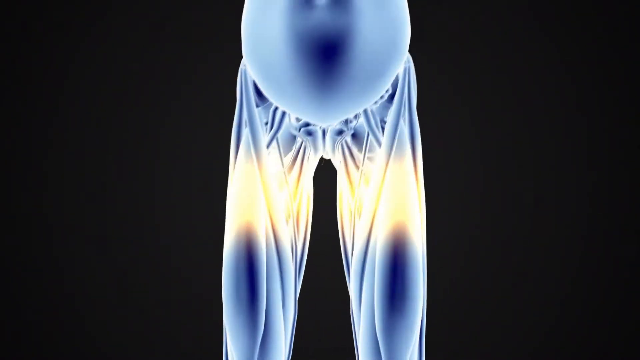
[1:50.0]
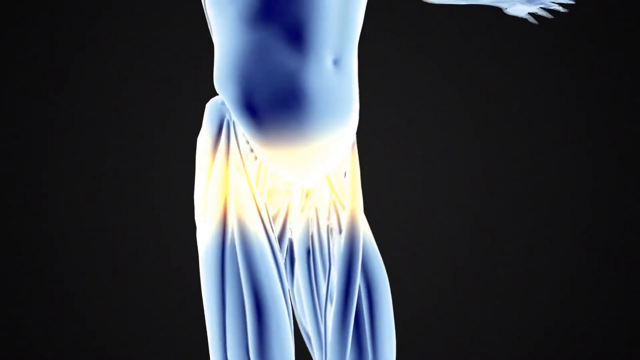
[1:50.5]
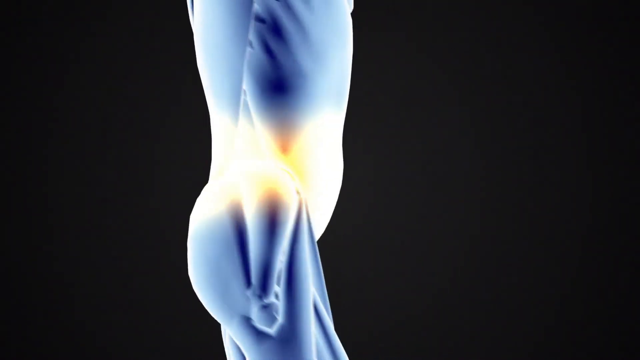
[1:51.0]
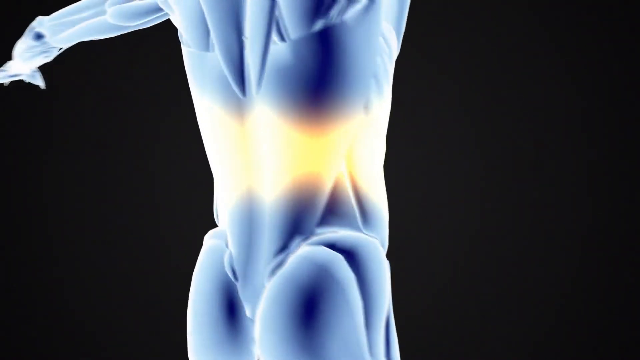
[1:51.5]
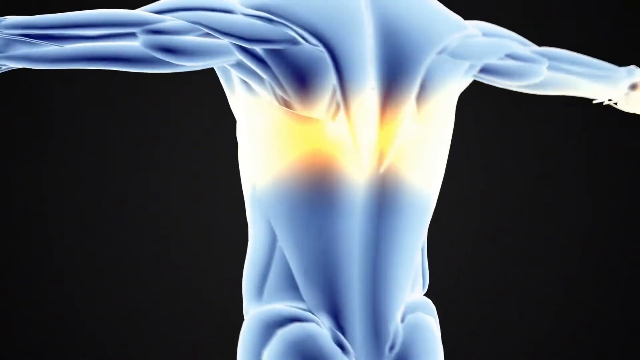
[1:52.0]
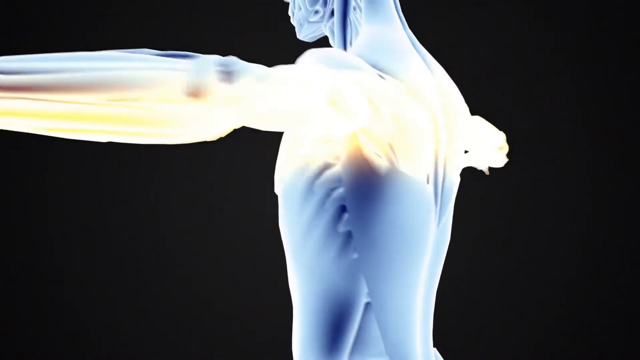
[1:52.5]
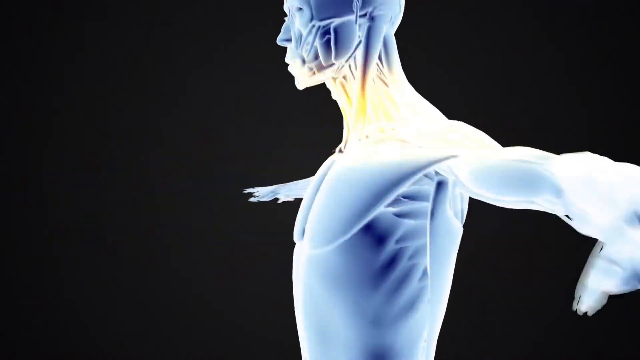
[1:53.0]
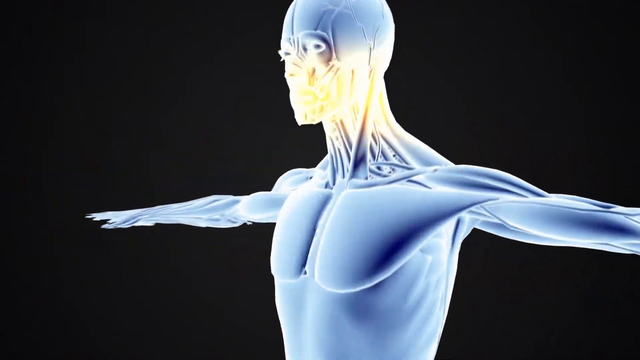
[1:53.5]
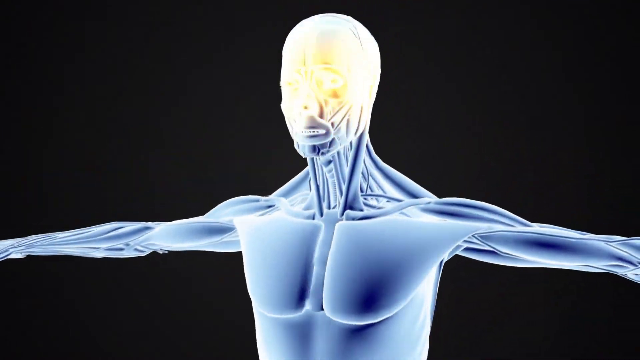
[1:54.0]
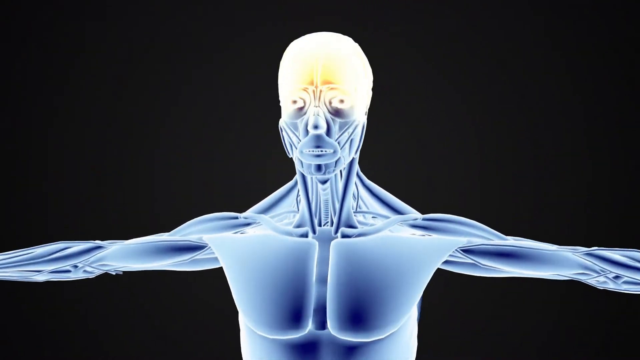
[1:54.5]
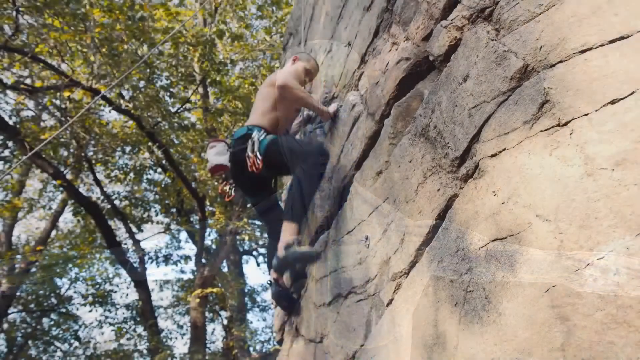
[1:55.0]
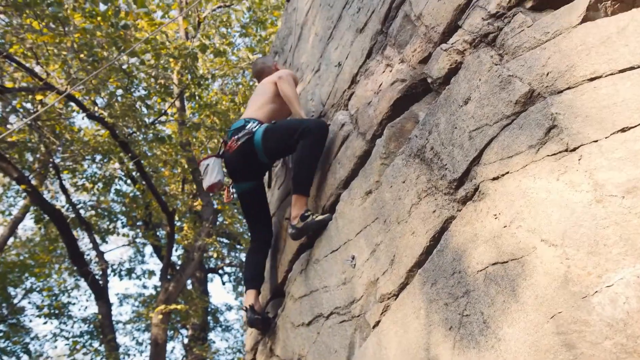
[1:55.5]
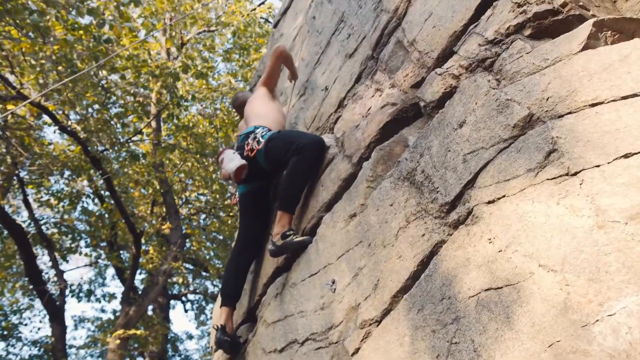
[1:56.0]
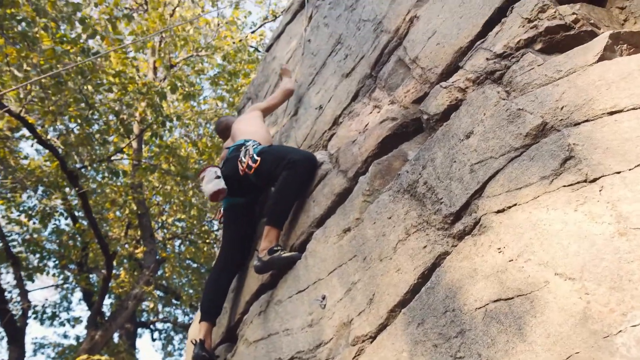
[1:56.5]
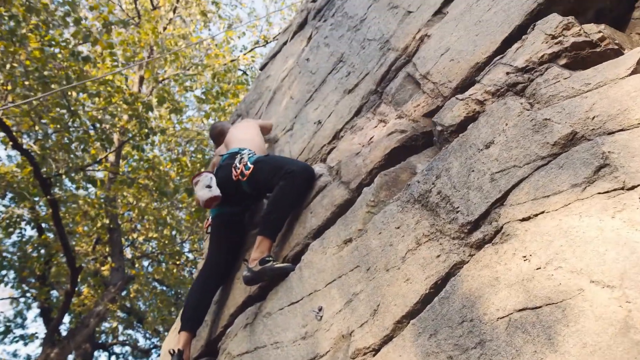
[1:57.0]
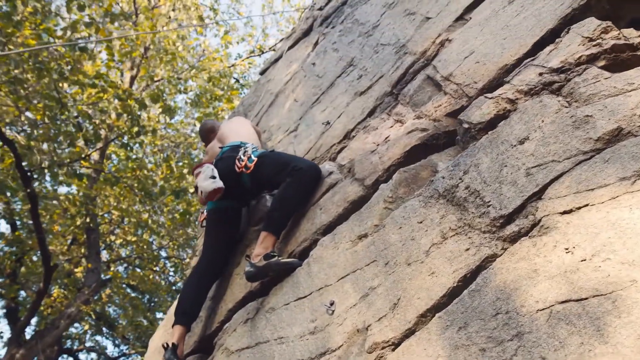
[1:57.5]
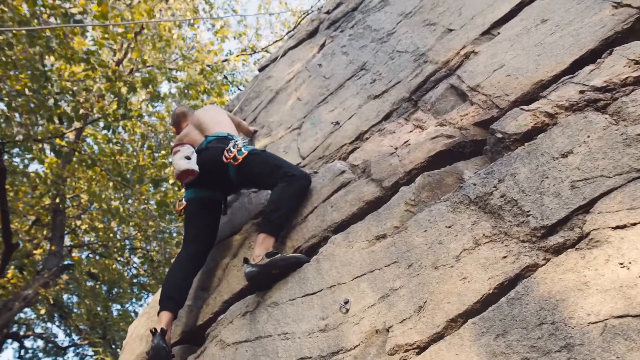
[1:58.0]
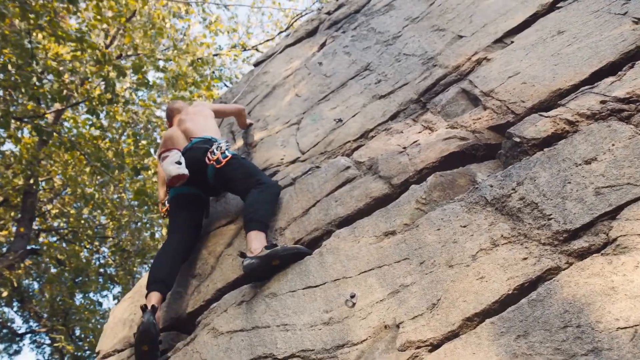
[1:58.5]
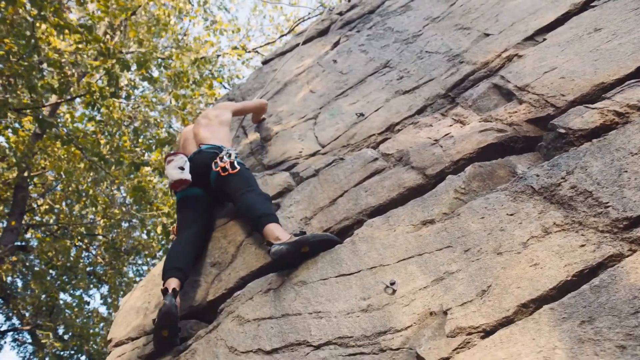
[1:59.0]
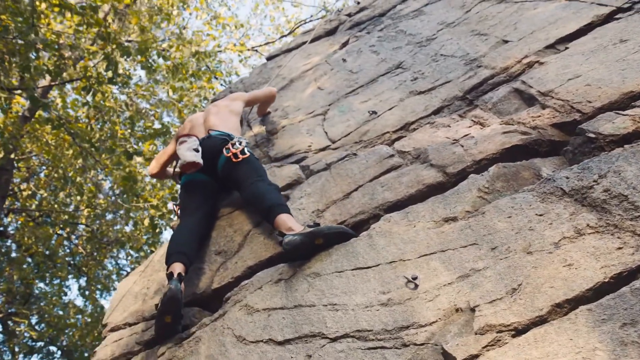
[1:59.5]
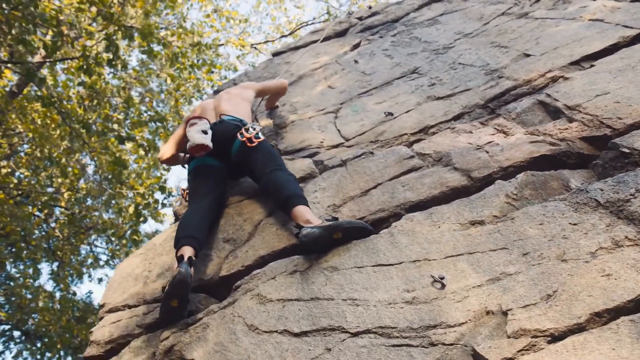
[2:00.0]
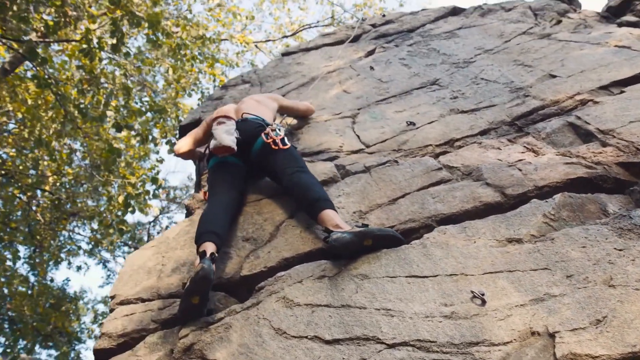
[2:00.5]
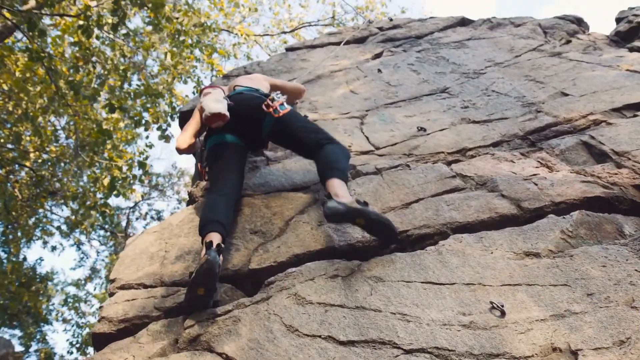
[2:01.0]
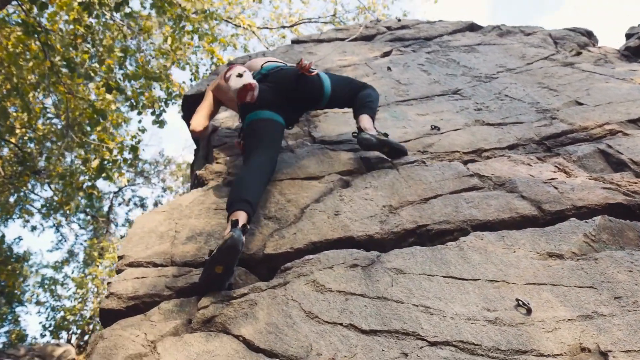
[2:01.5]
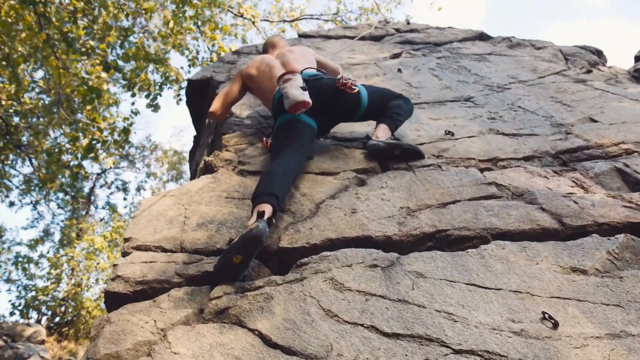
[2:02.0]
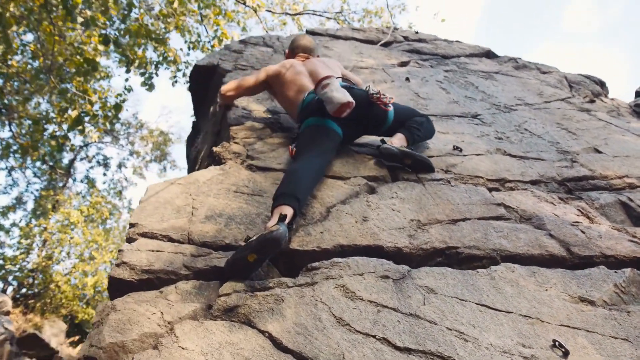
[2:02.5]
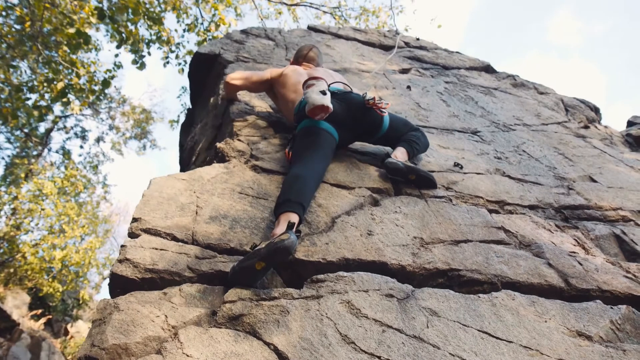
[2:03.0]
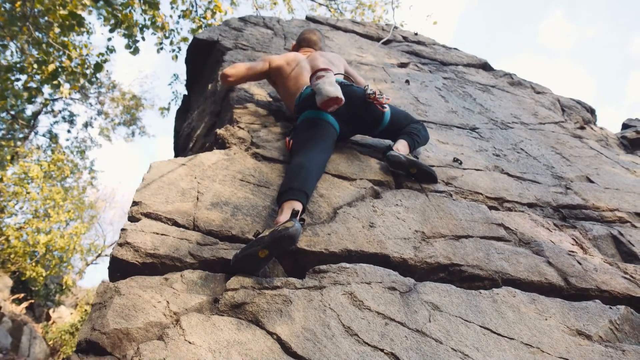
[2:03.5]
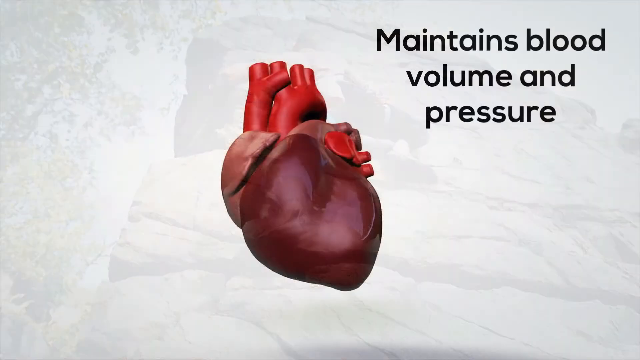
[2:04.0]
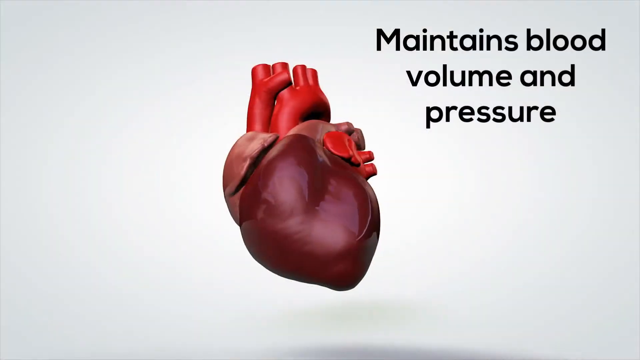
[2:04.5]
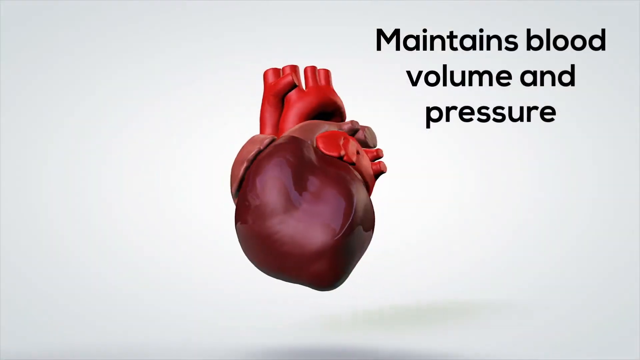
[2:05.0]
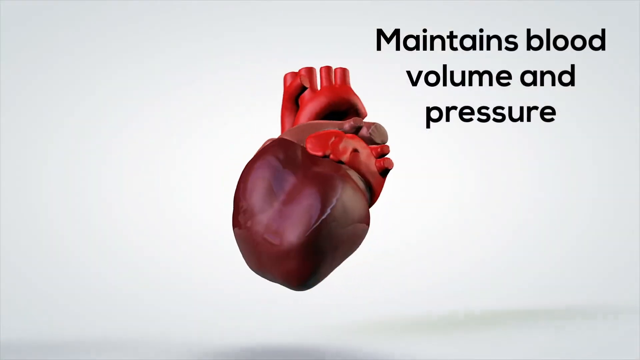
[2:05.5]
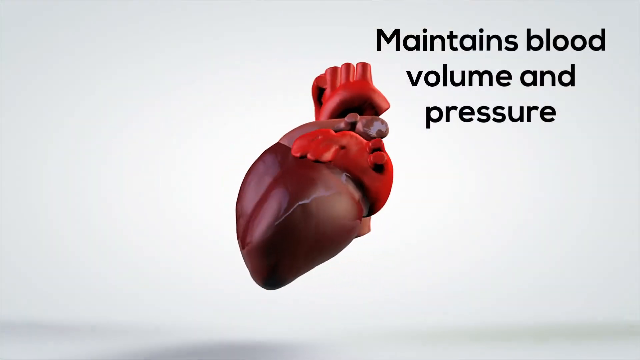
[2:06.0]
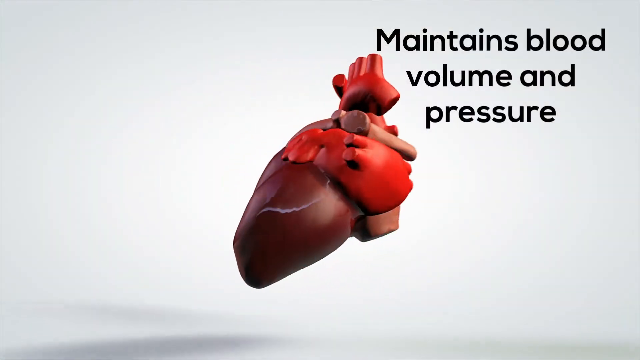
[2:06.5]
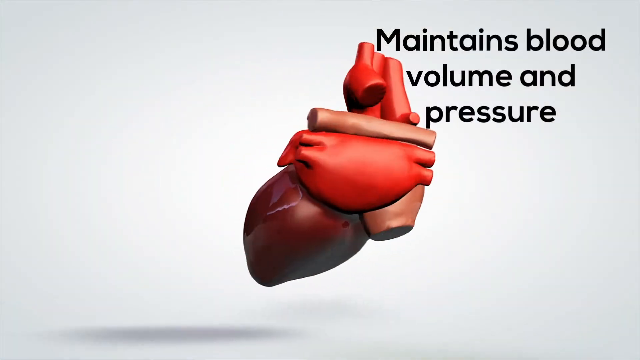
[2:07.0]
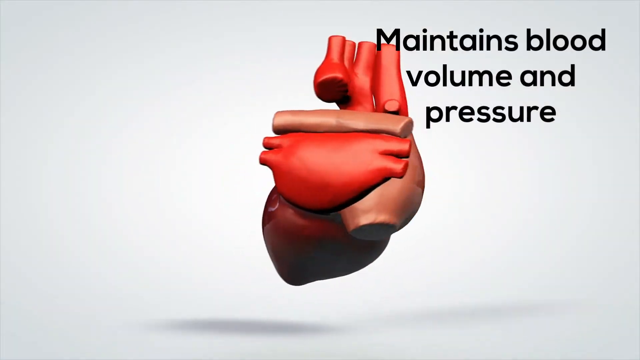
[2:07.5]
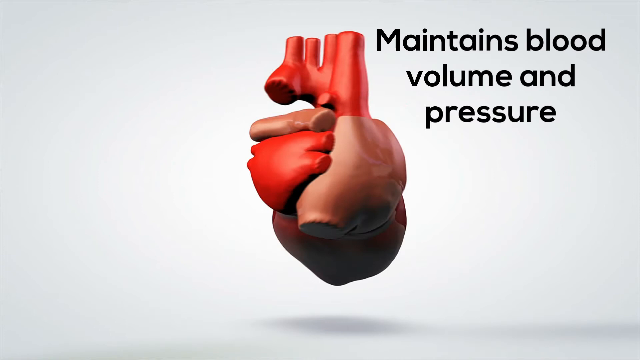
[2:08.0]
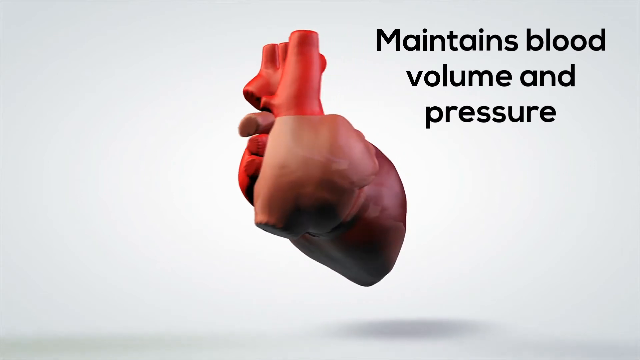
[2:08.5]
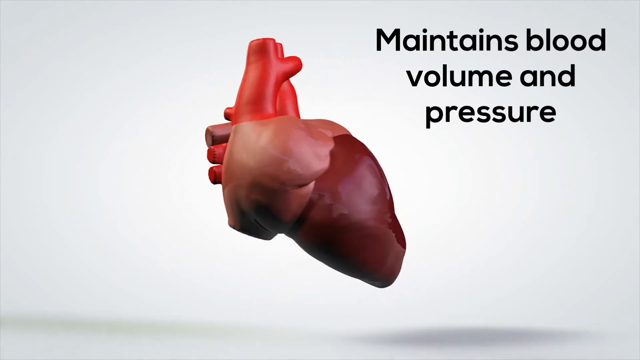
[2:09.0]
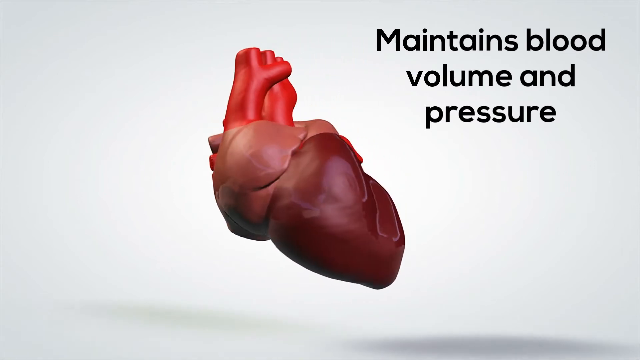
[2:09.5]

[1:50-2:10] A human body illuminated in blue lighting is shown moving in circular movements on the screen. The video moves to a man rock climbing. The rock is visible, with some trees on the side. A water bottle is tied around his waist, ropes hang from the top, and he wears a harness. He is shirtless and wears black tights and sneakers. Next comes a picture of a 3D heart with "maintains blood volume and pressure" in the top corner; the heart rotates round and round, showing its arteries and veins.